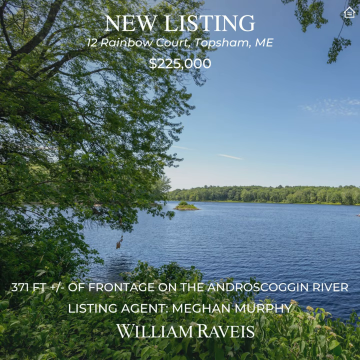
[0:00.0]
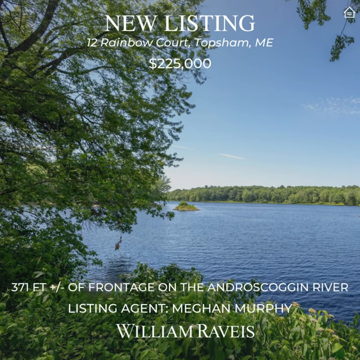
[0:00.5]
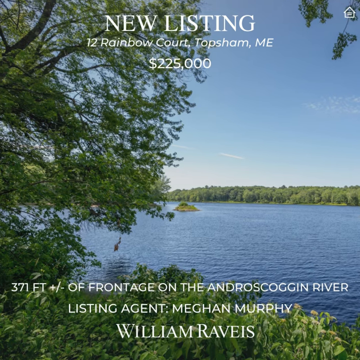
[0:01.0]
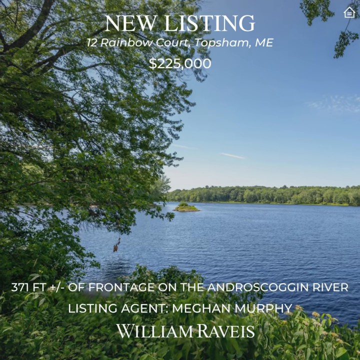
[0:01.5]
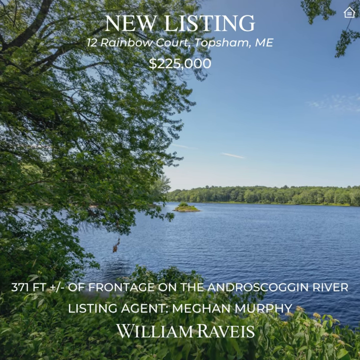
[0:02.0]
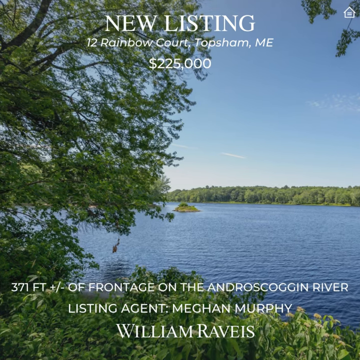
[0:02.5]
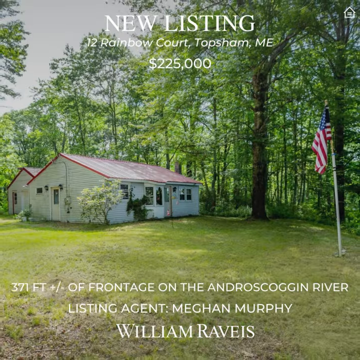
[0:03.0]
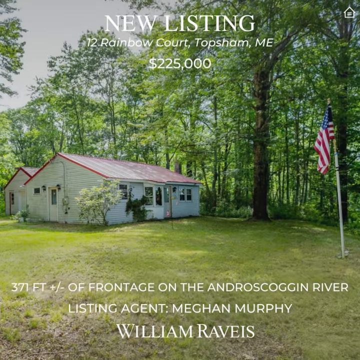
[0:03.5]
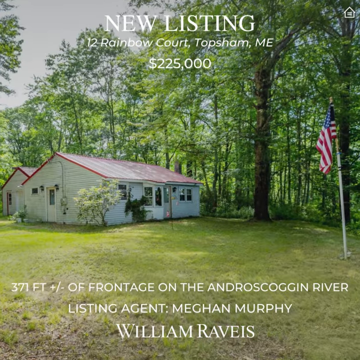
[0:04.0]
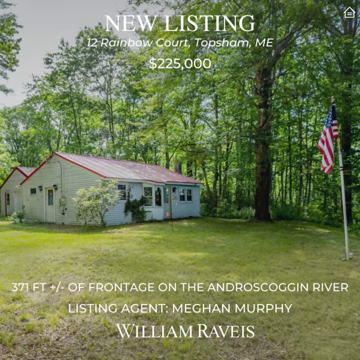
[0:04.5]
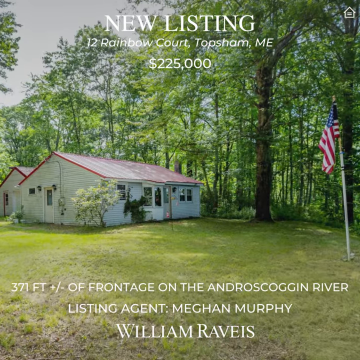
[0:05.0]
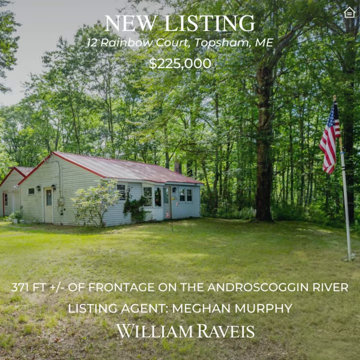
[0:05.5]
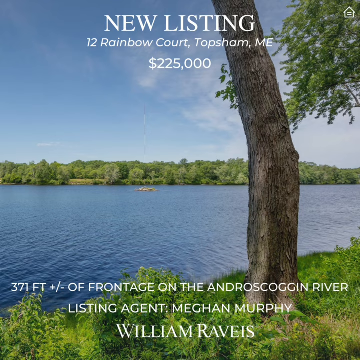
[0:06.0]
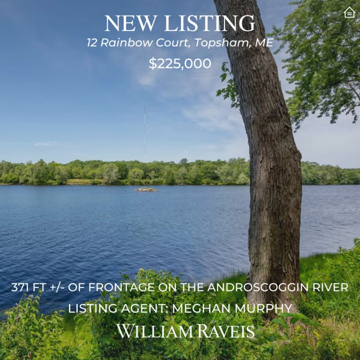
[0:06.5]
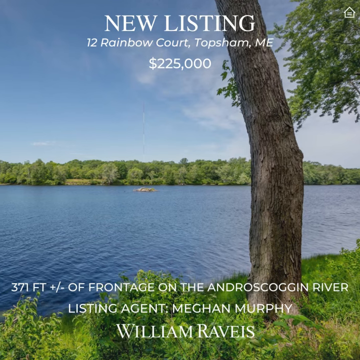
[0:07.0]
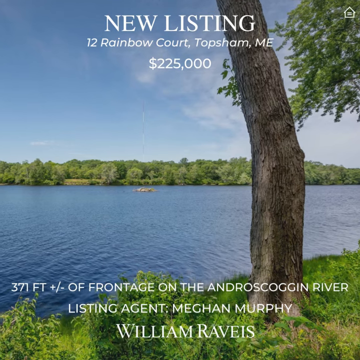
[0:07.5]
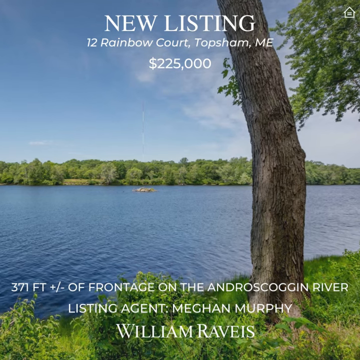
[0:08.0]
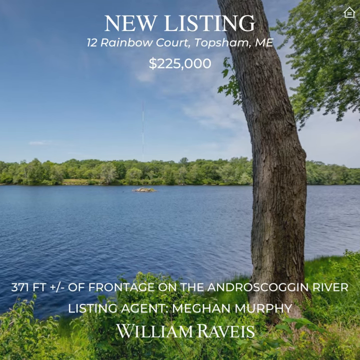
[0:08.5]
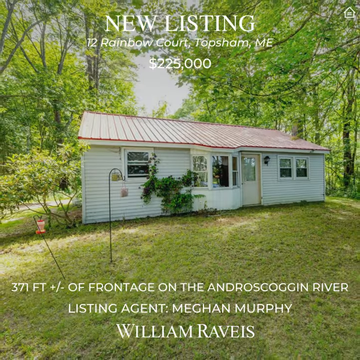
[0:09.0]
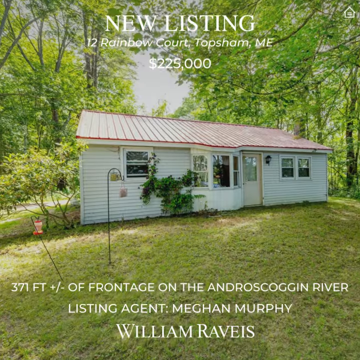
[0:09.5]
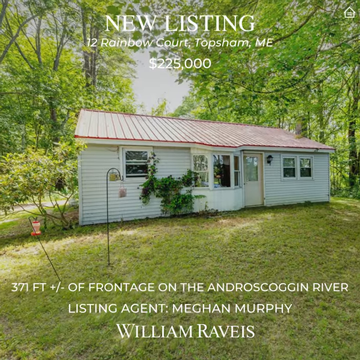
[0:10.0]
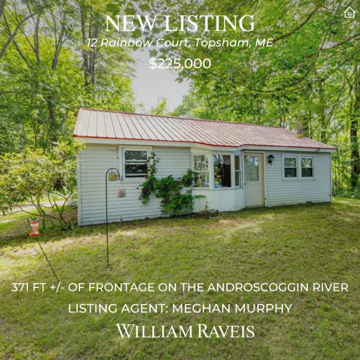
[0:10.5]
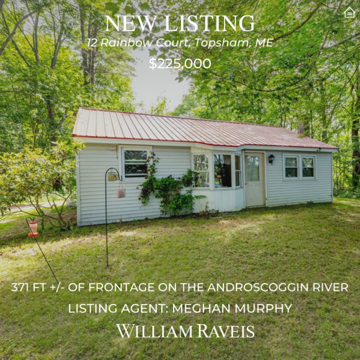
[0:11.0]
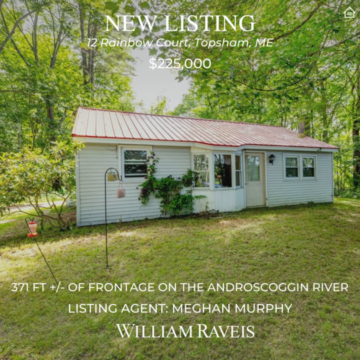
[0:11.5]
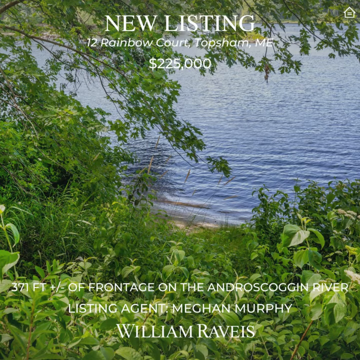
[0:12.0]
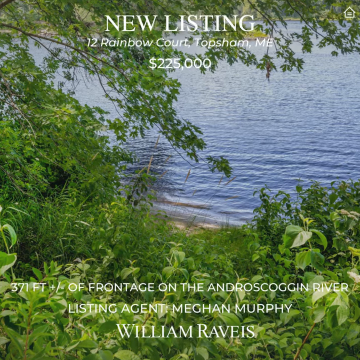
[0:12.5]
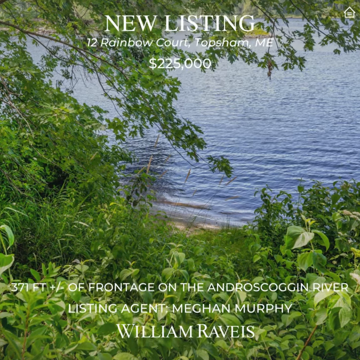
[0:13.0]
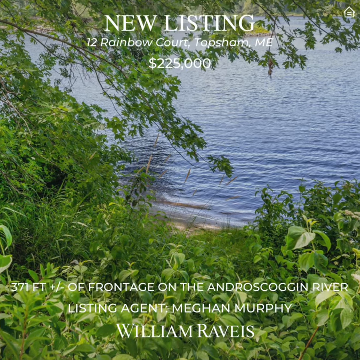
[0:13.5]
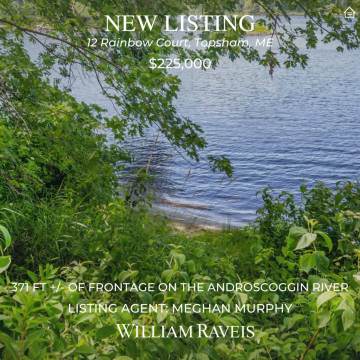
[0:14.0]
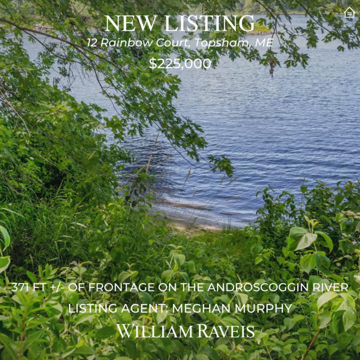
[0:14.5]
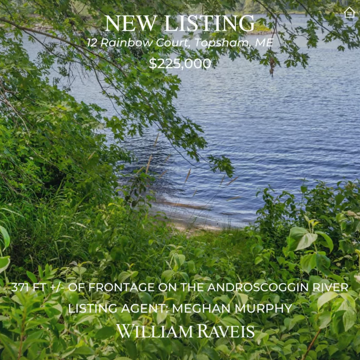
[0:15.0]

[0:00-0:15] On-screen text reads "new listing" and "12 Rainbow Court," followed by text about feet of frontage, plus or minus, on a river, and "Listing agent is Megan Murphy." The picture shows a very serene water setting, with blue water and trees around it. There is a small white house with a metal red roof; the house looks very tiny, smaller and more elongated. An American flag is in the front yard, up toward the right side. The front of the house has a bay window facing out toward the water, with windows on each side of the bay window and on the other side of the porch. The house has a door on the left side, and the door on the front is more toward the right. In the front yard, a flower is hanging on a hook. There is green grass and multiple trees, and a white tree is at the corner of the house.